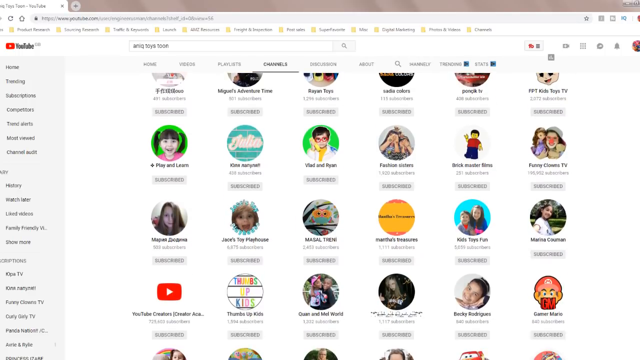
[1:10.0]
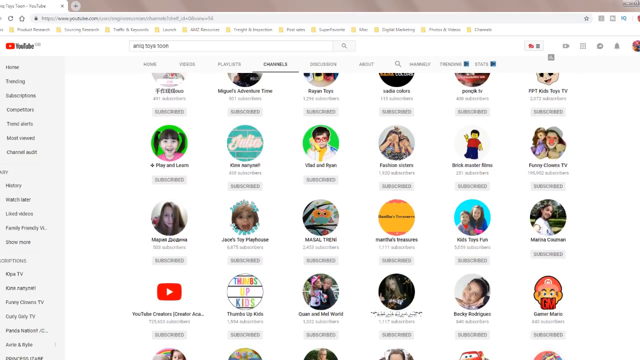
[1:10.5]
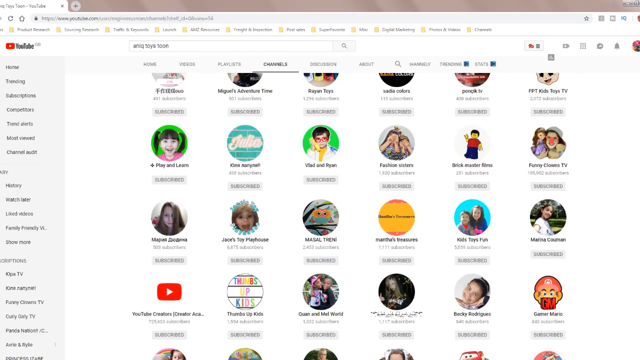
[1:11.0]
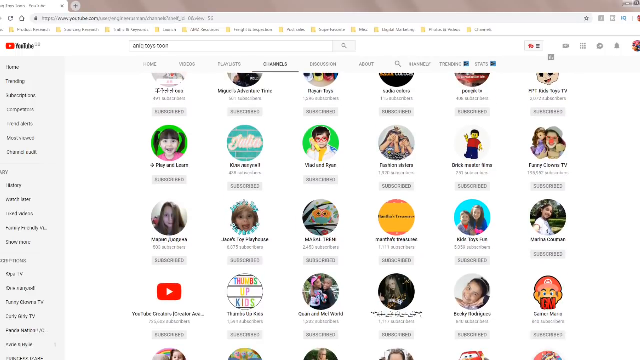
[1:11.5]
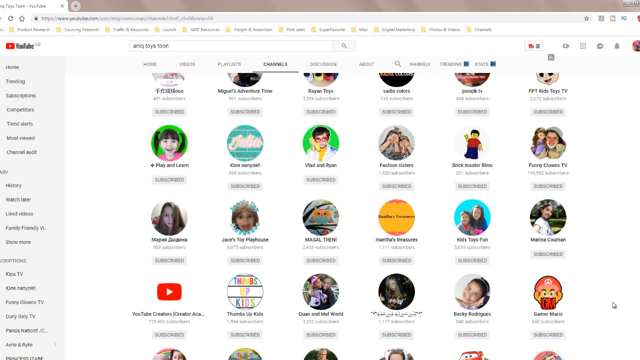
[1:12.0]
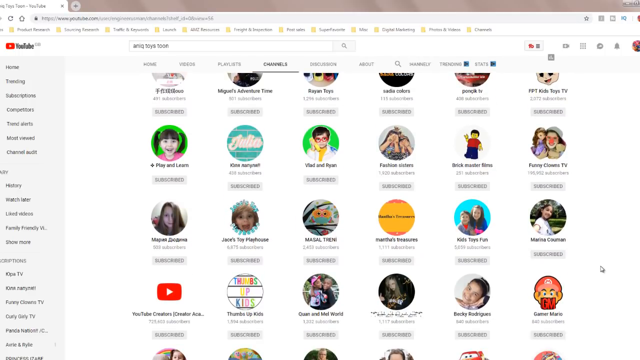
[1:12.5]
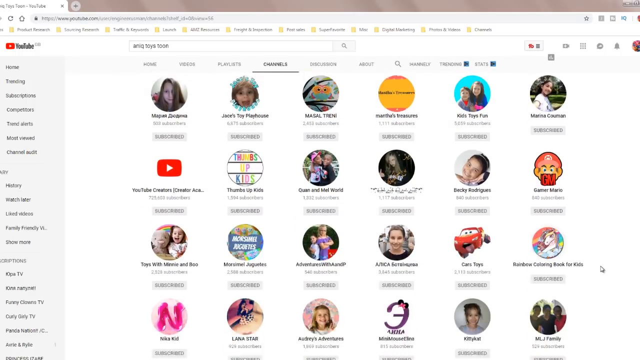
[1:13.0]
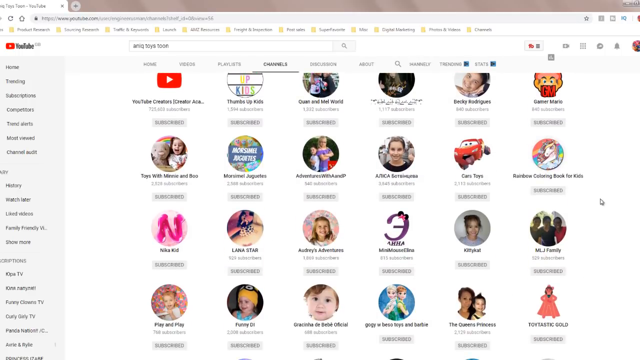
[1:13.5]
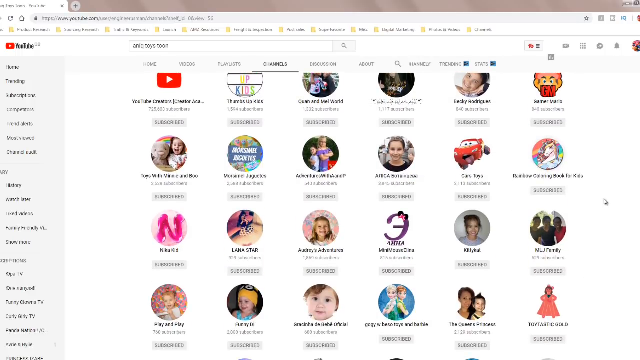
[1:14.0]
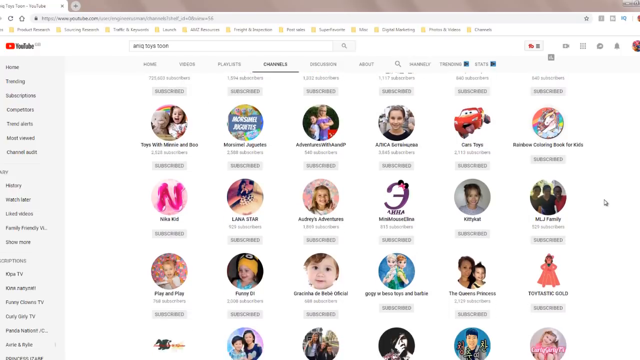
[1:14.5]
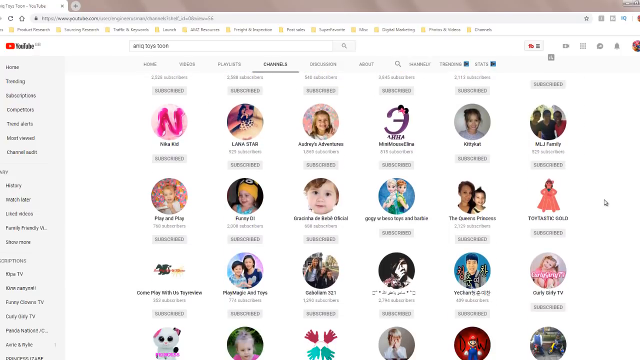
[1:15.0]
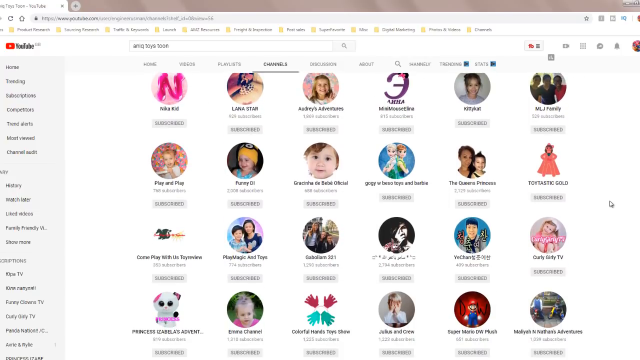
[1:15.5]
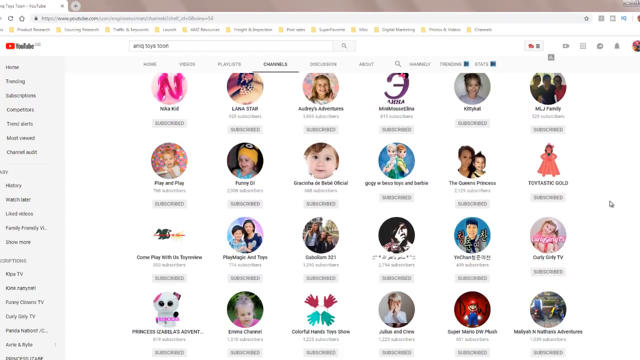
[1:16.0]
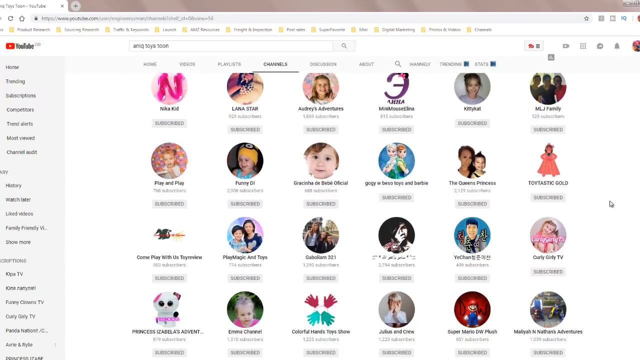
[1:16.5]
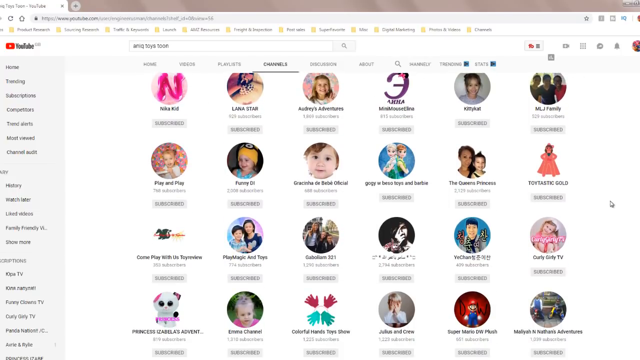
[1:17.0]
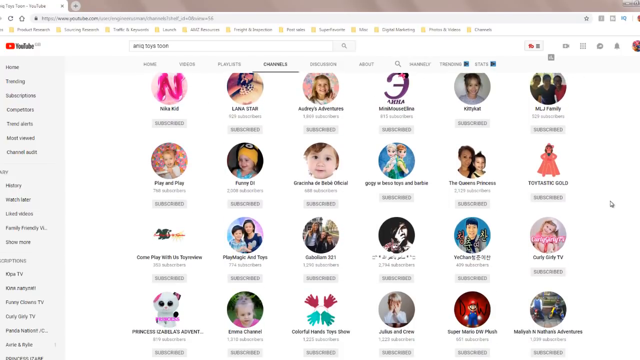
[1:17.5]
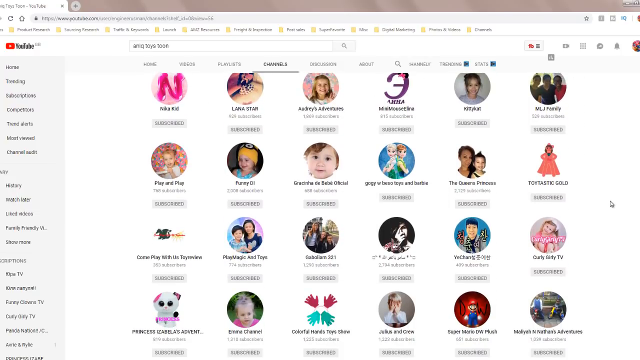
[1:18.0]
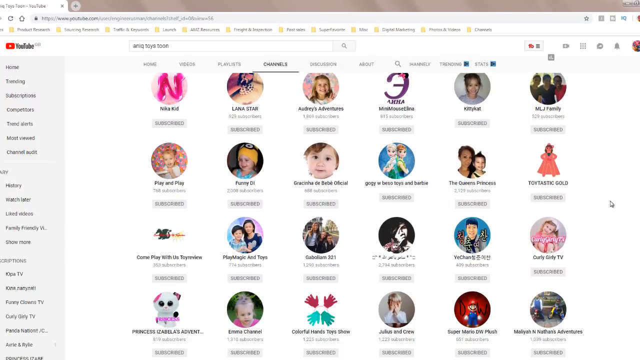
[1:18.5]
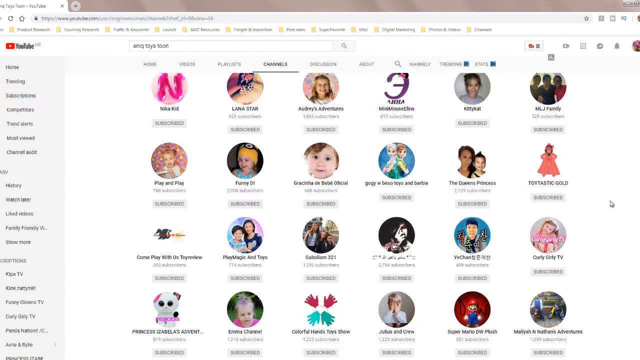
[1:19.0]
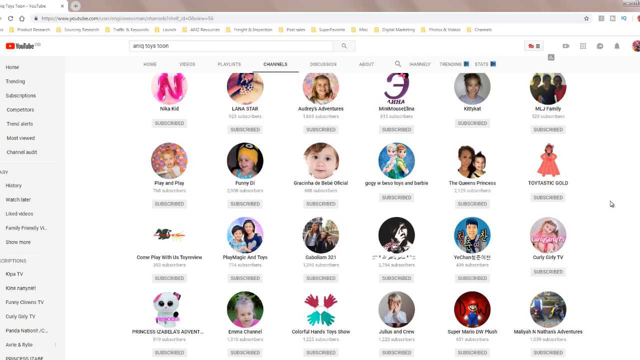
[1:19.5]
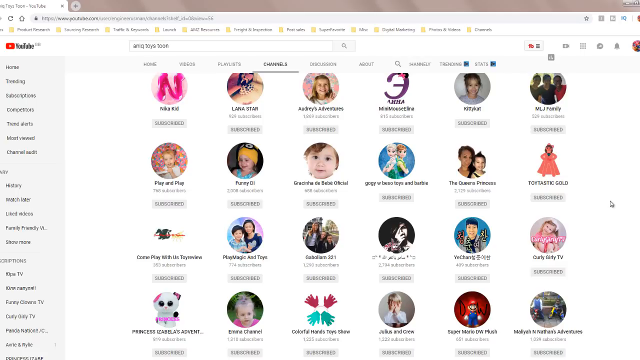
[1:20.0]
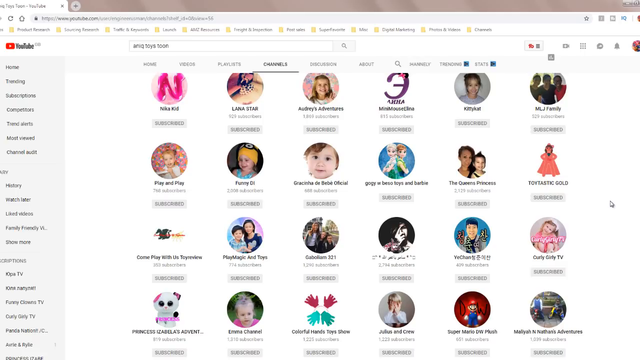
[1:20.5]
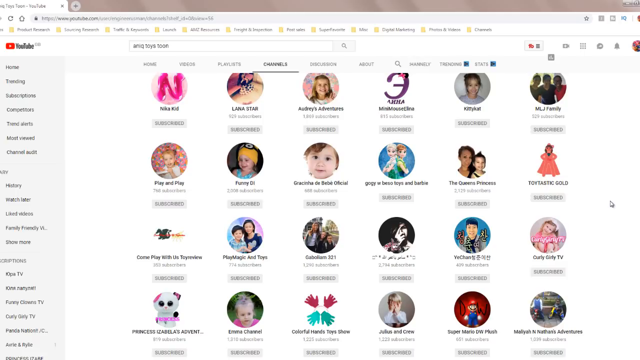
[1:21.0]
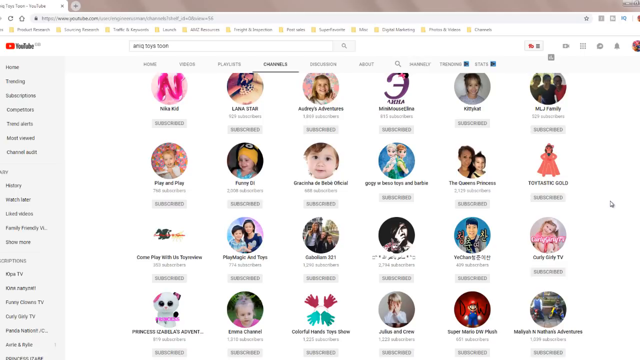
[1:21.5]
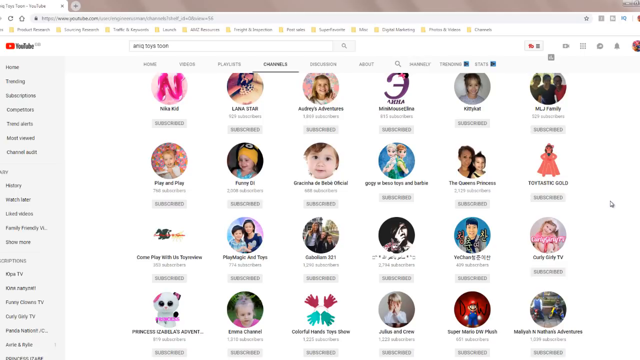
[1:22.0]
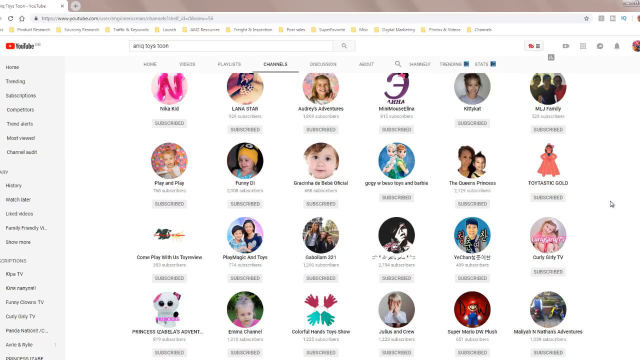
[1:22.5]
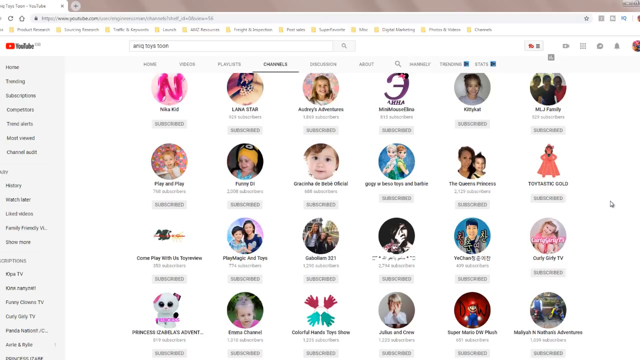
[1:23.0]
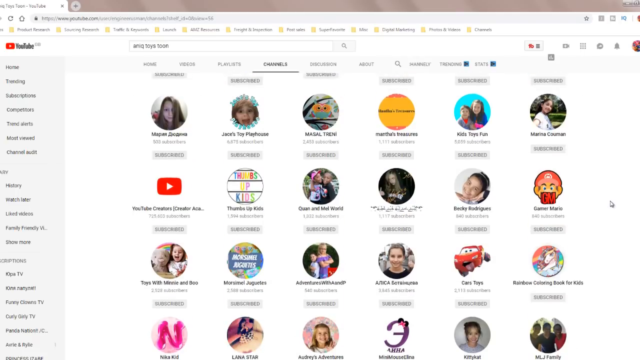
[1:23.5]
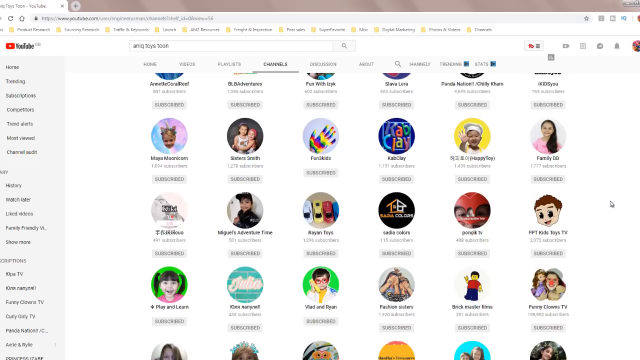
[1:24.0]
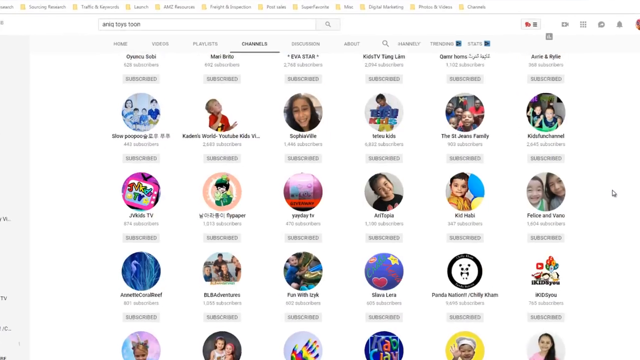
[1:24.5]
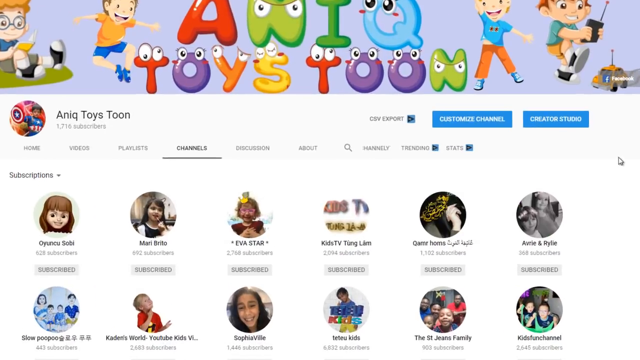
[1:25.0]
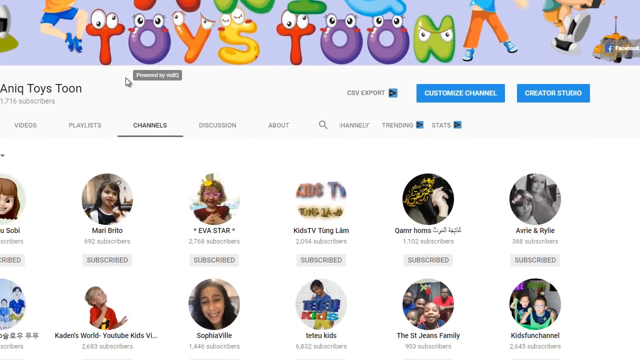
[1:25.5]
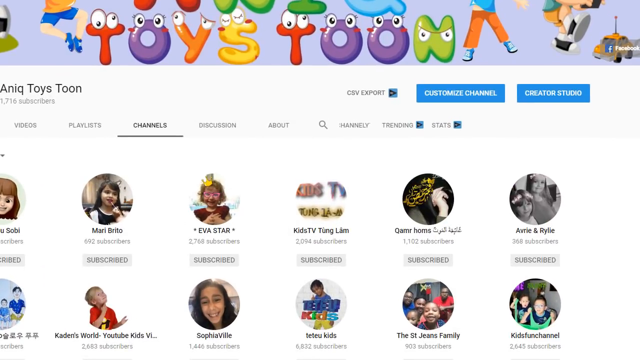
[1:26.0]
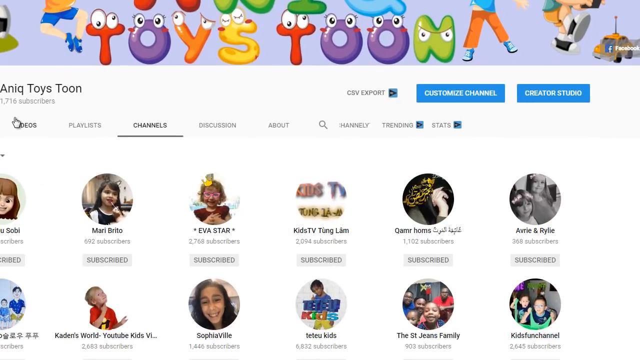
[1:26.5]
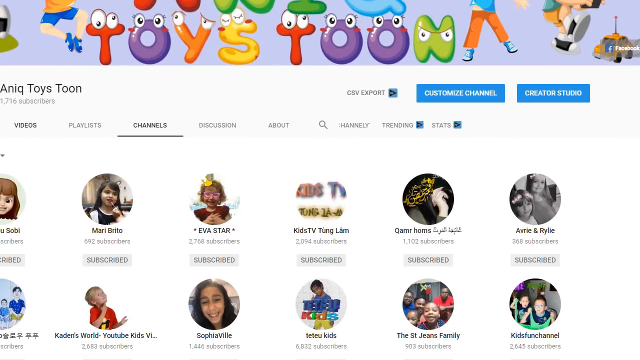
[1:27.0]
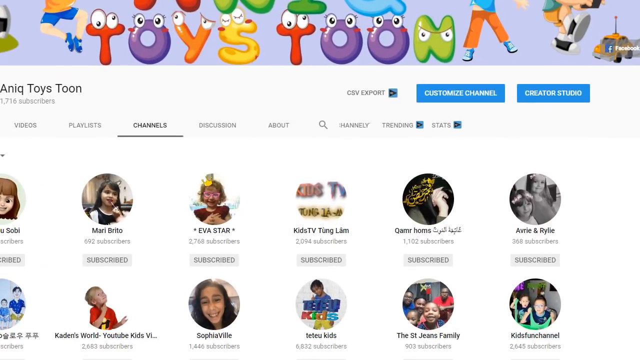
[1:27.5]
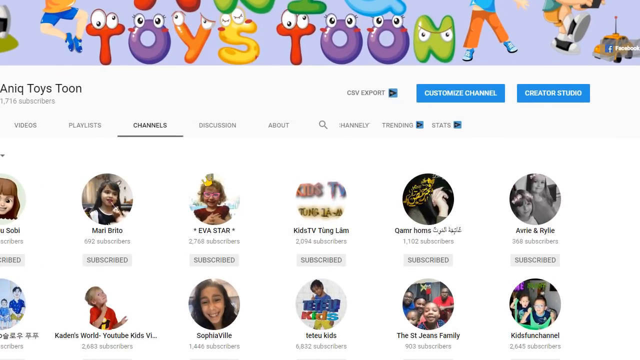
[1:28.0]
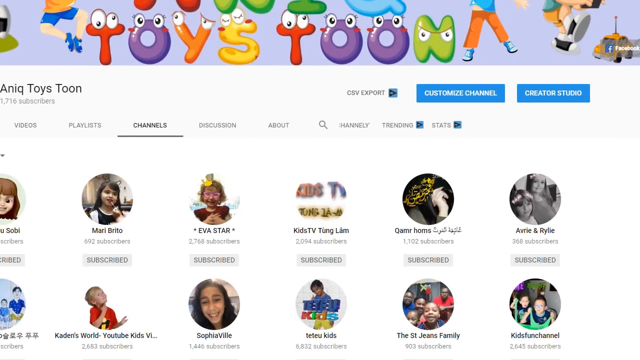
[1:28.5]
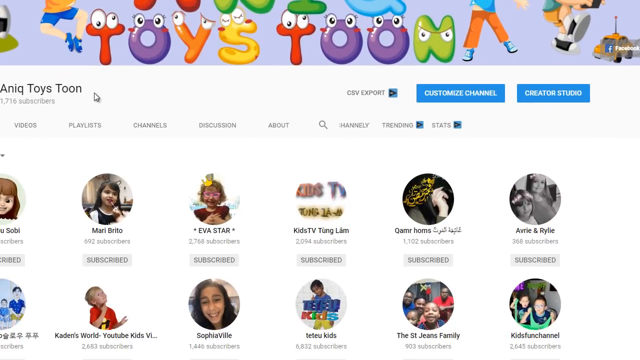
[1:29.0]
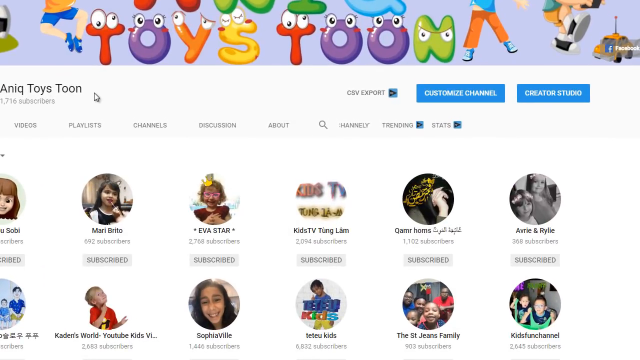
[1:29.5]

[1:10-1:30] As the person scrolls down, many channels appear, with a big variety of faces: cartoonish images and images of children, cartoon characters, families and babies. The person scrolls down further to show even more channels, then zooms in and clicks on the option "videos". Other options on the main page include "discussion", "trending" and "stats". The page is very colorful, with purple, yellow, green, orange and blue, and there are cartoon characters of girls and boys.